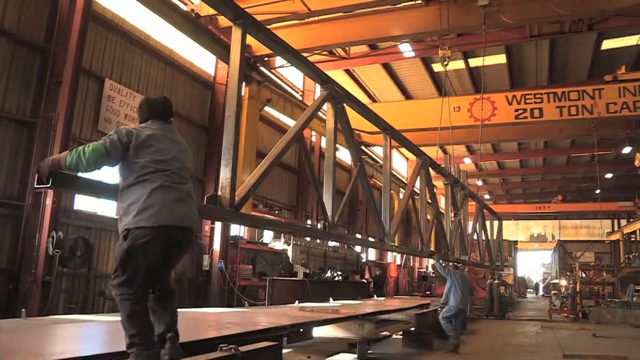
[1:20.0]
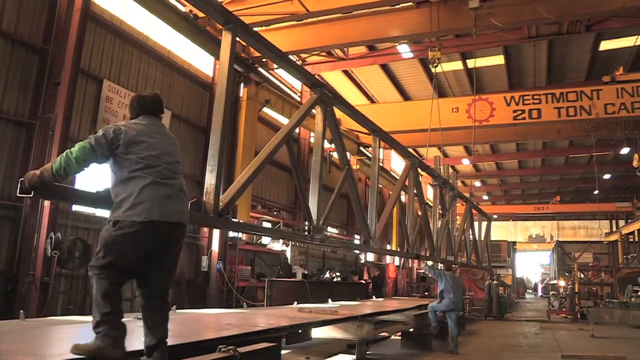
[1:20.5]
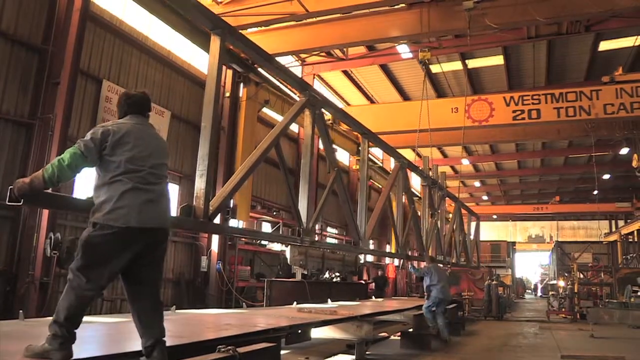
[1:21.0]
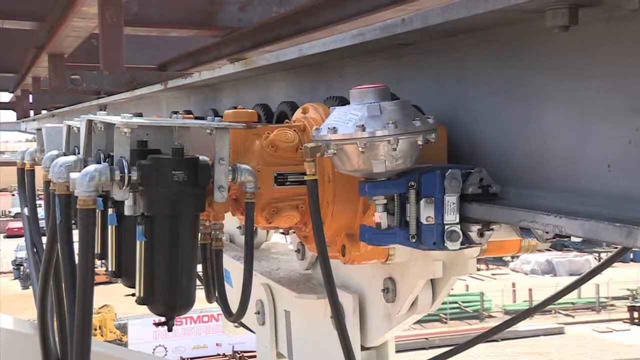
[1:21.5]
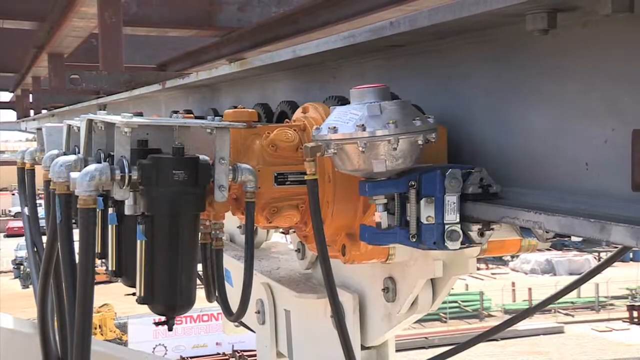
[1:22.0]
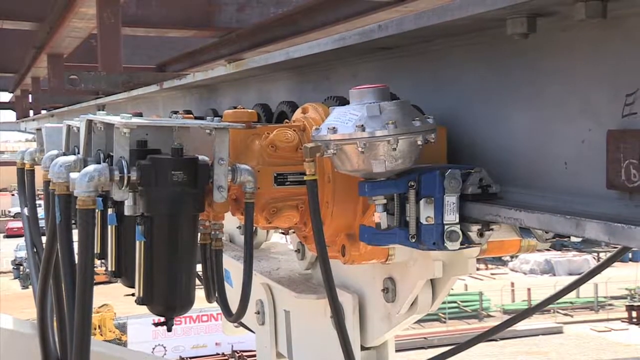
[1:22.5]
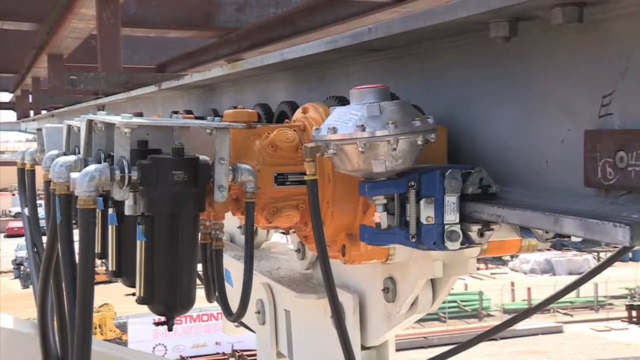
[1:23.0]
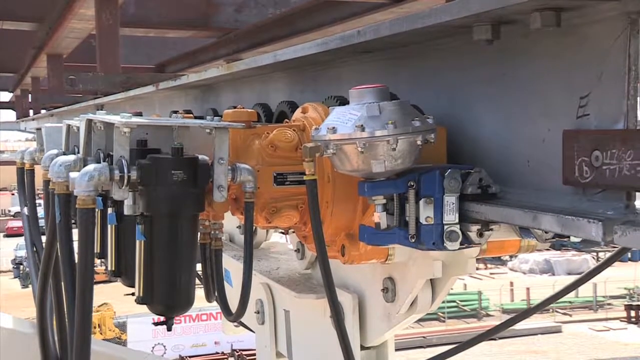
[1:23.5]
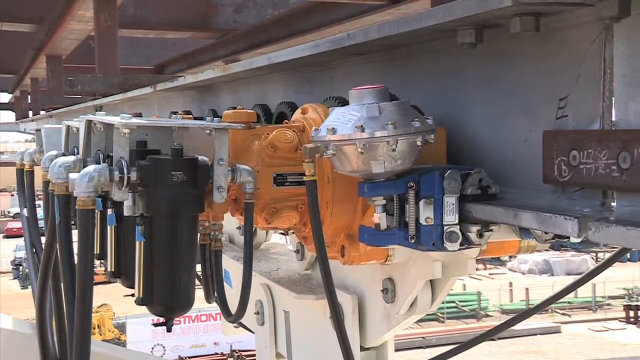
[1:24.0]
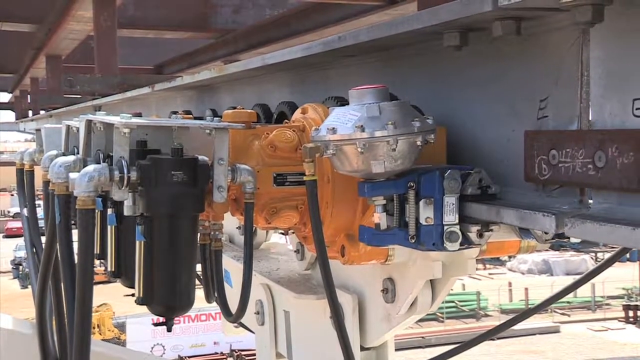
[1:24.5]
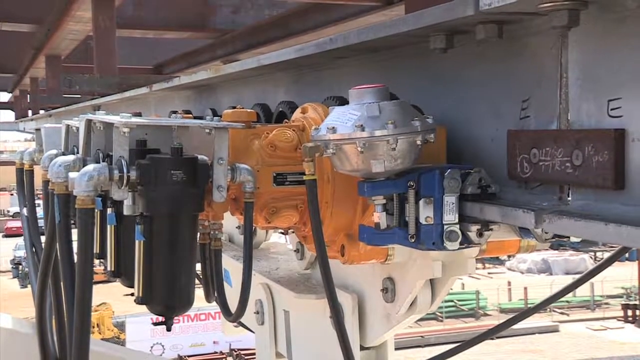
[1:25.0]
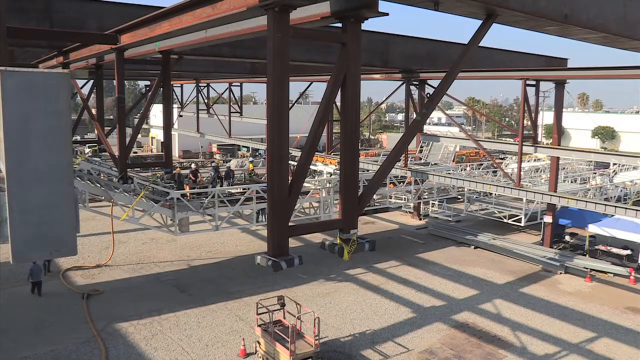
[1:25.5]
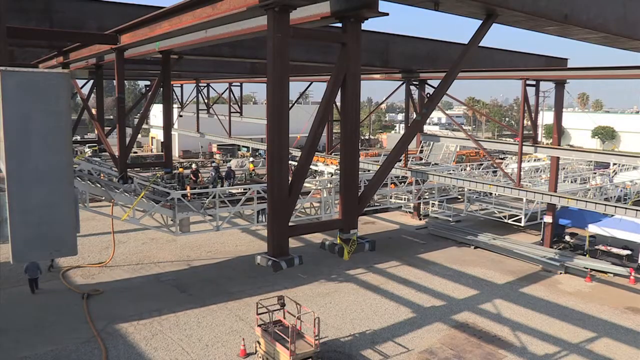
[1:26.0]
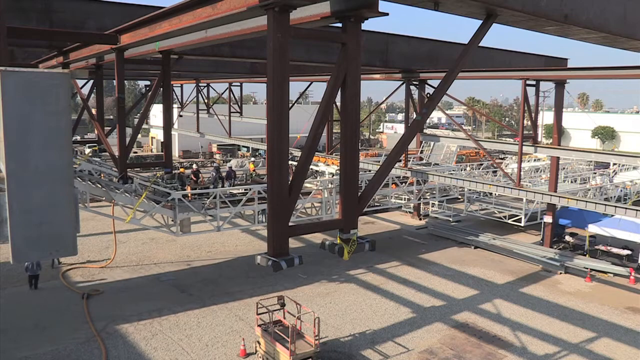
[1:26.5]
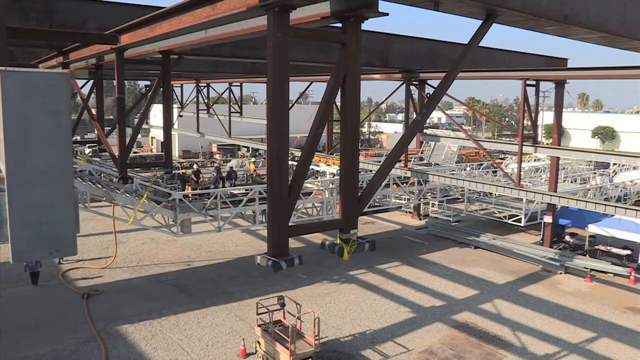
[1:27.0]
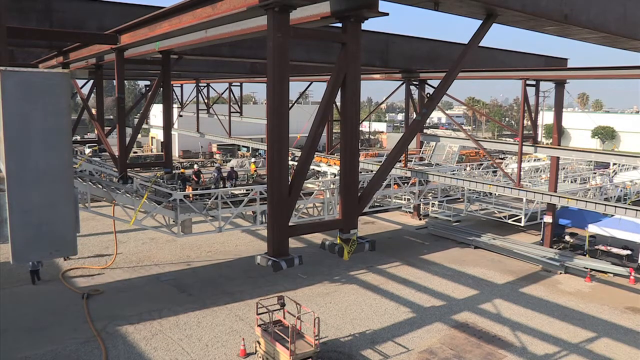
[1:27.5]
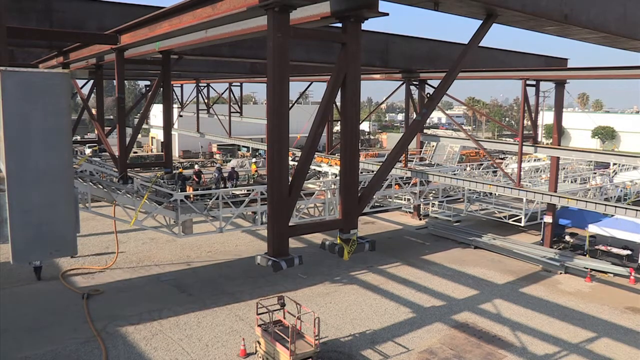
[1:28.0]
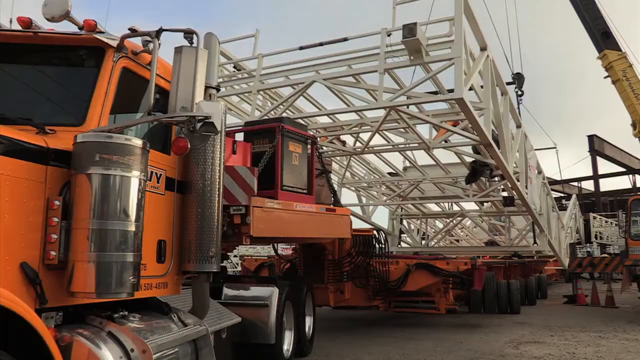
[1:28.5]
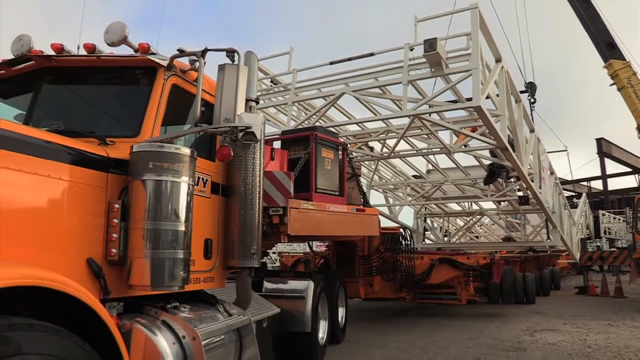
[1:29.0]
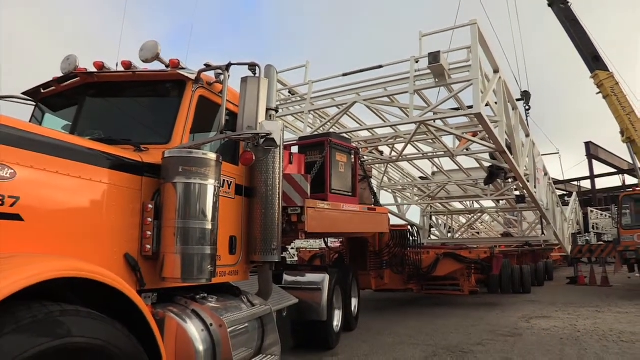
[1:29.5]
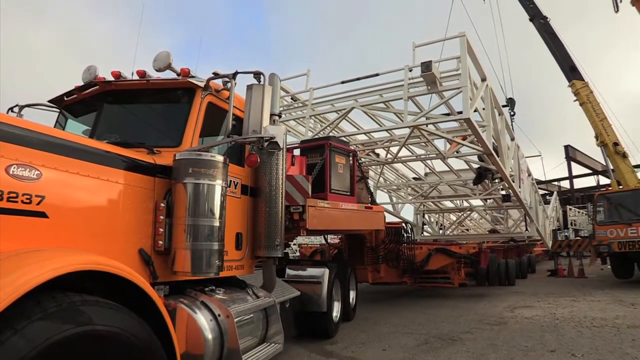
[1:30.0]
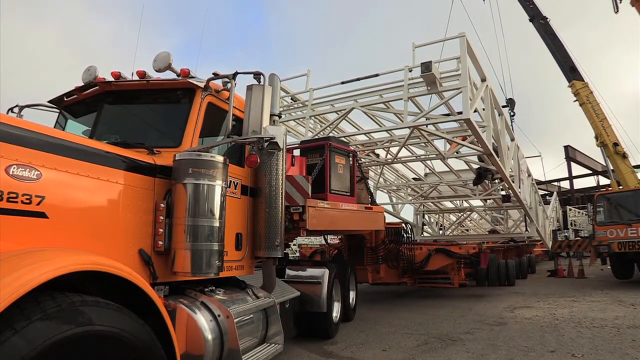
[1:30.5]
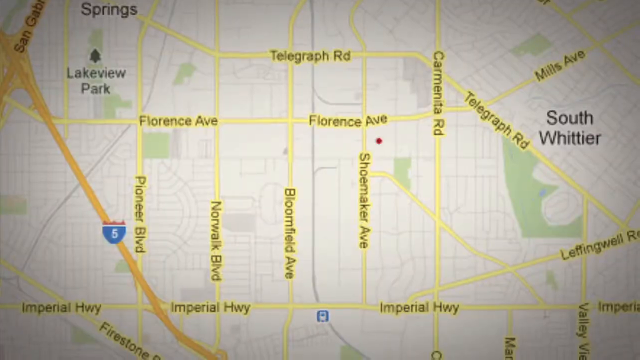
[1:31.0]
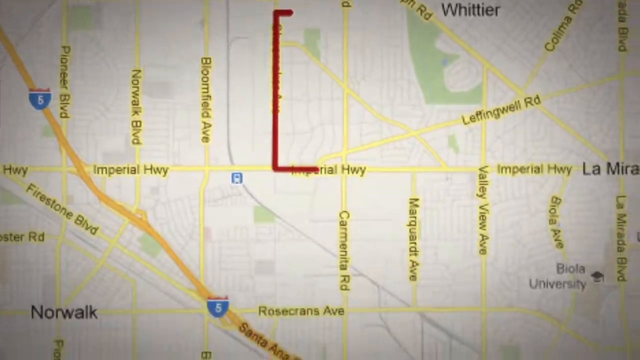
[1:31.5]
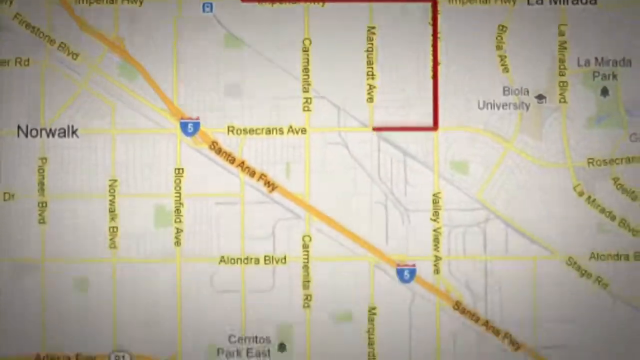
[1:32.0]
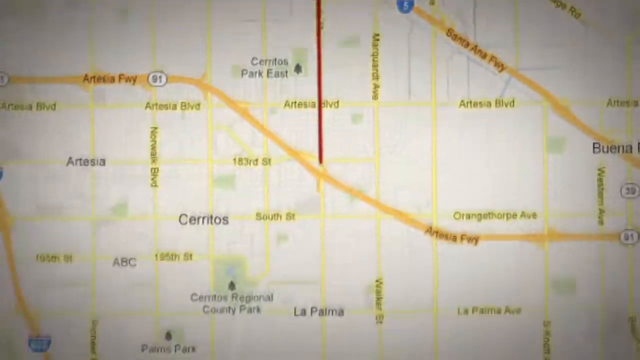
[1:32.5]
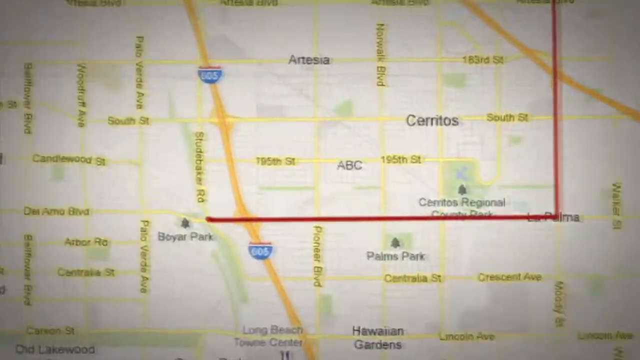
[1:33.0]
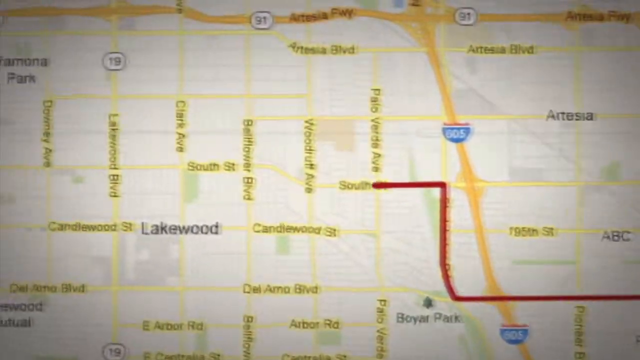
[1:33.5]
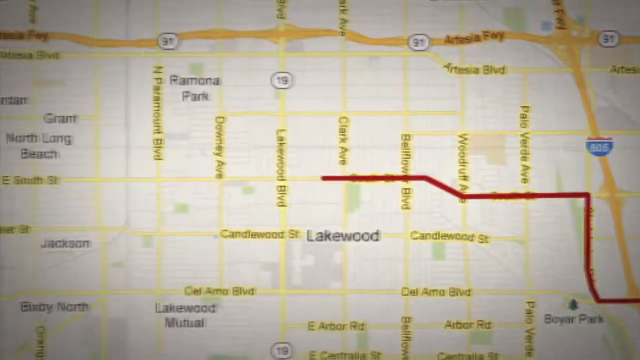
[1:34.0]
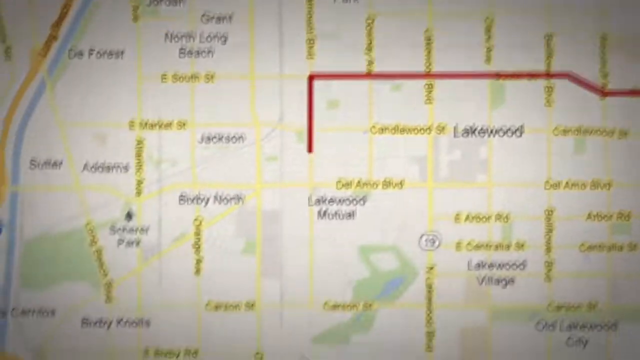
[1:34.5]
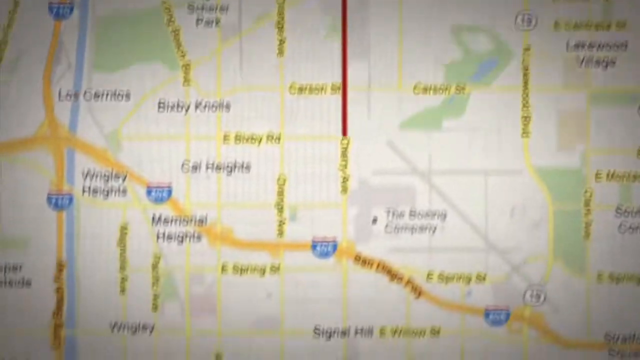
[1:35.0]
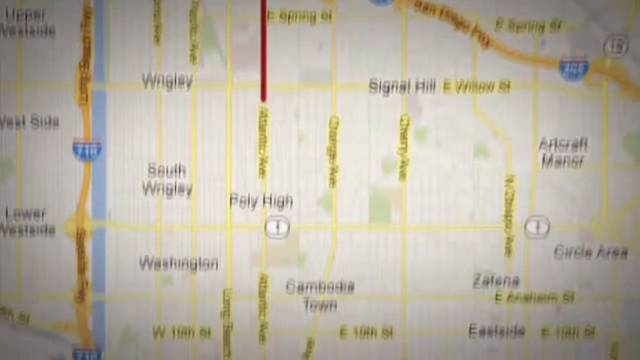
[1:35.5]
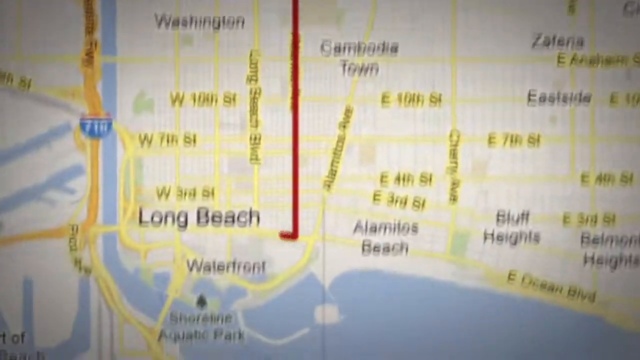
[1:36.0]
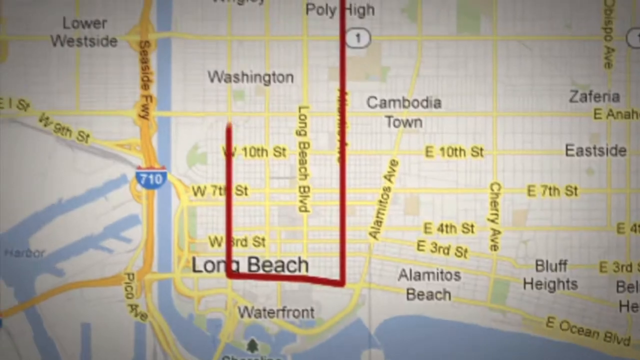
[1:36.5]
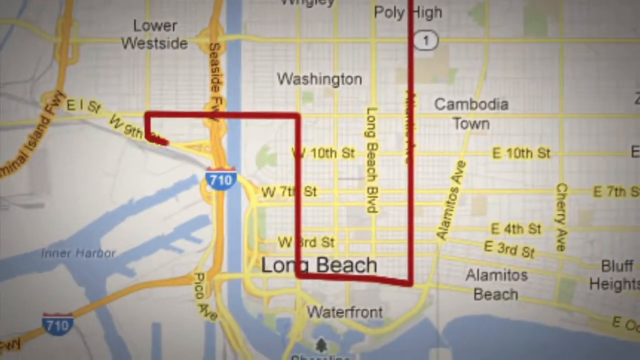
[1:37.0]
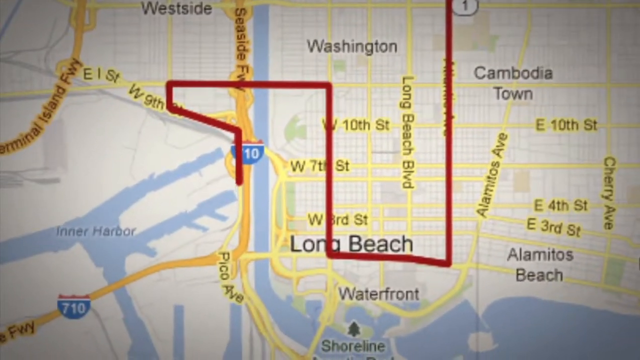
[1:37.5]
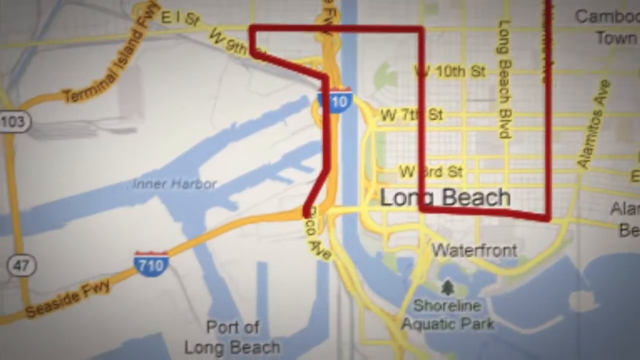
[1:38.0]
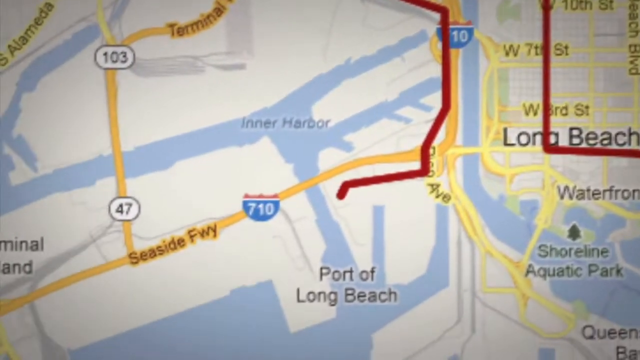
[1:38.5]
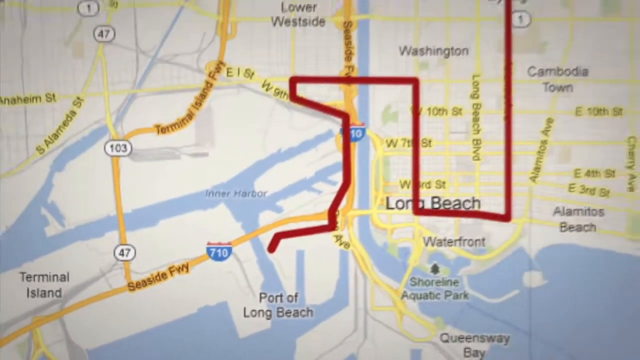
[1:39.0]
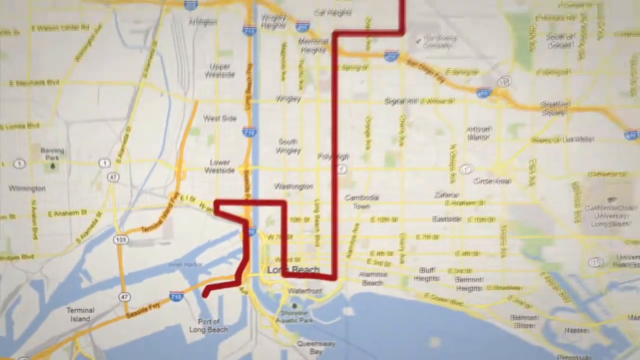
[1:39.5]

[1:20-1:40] The men move the silver beam. On one of the beams up ahead, the start of "Westmont Industries" is visible, only "Westmont" and part of "IND", with what almost looks like a sun or gear logo and the number 13 to the left of that. Outside, construction workers work with more beams, and then the inside of different moving parts is shown. The scene transitions to an orange cab truck that apparently is being used to lift and move a white beam, with different cables connecting it to cranes as workers try to hook everything up. A close-up of a map shows South Whittier, Florence Avenue, and the streets and areas around Interstate 5 and Imperial Highway. The map moves down to show the Santa Ana Freeway, possibly showing a route, and then Saratoss. It pans left to the Lakewood area and Ramona Park. A red line follows the route along the road as the camera pans, going down past Memorial Heights, then to Cambodia town and the Long Beach area. It goes left and then back up past the lower west side, back onto Interstate 710, and down to the port of Long Beach. The camera then pans out to show the full route outlined in red.